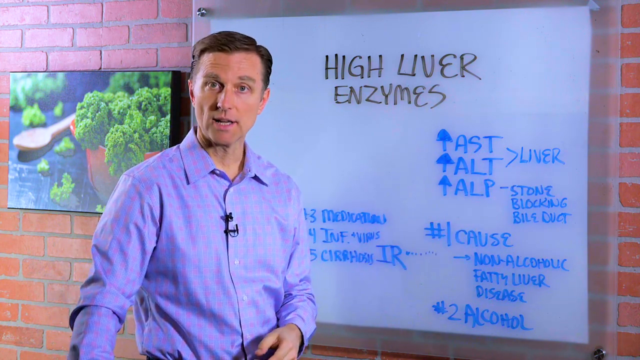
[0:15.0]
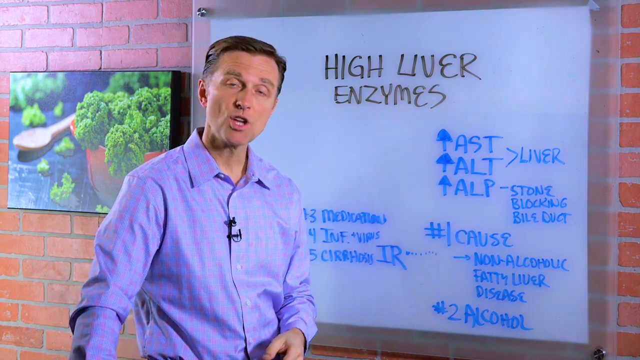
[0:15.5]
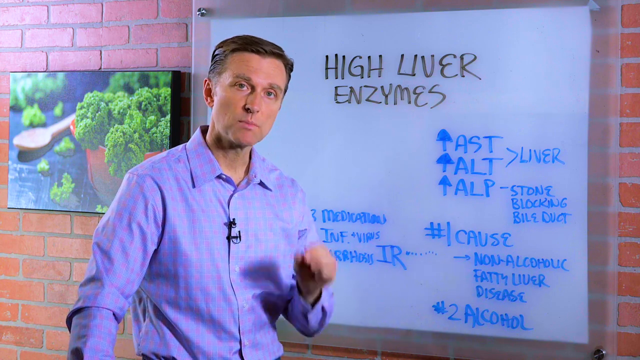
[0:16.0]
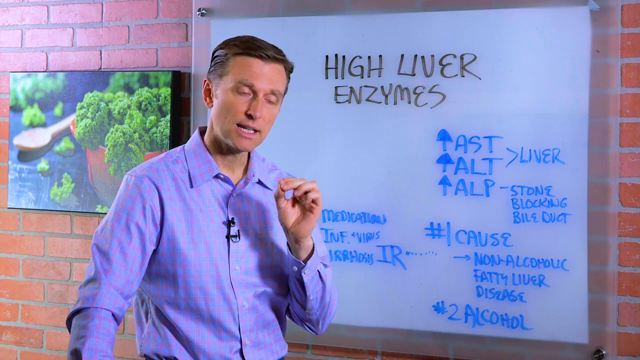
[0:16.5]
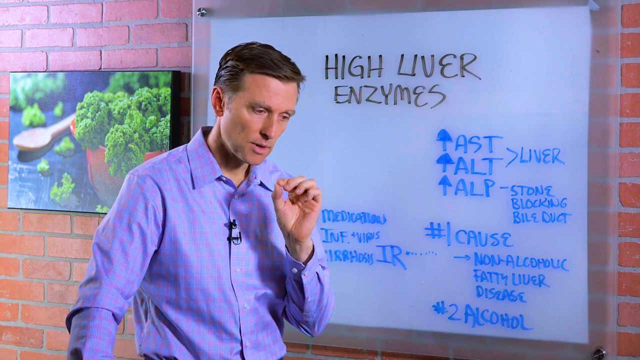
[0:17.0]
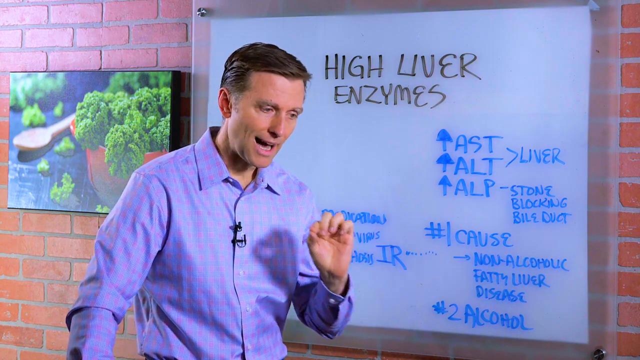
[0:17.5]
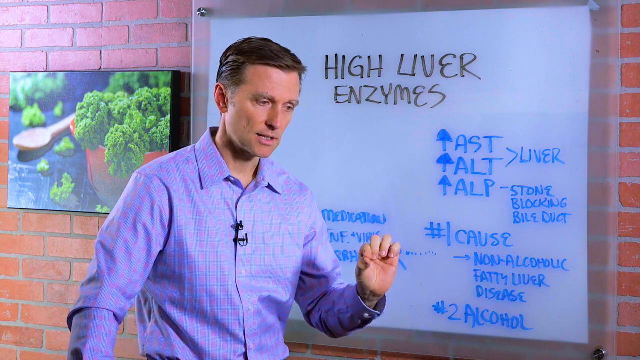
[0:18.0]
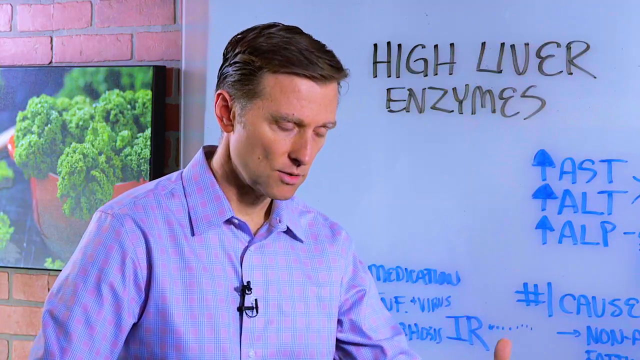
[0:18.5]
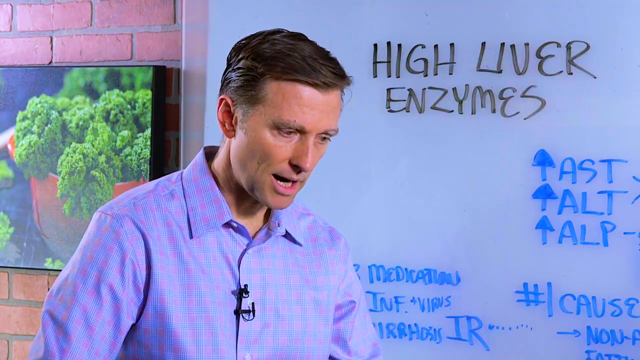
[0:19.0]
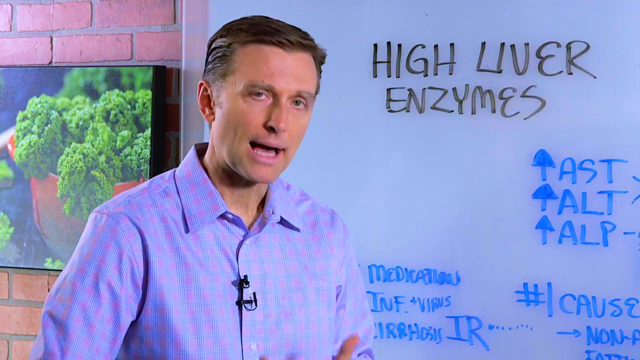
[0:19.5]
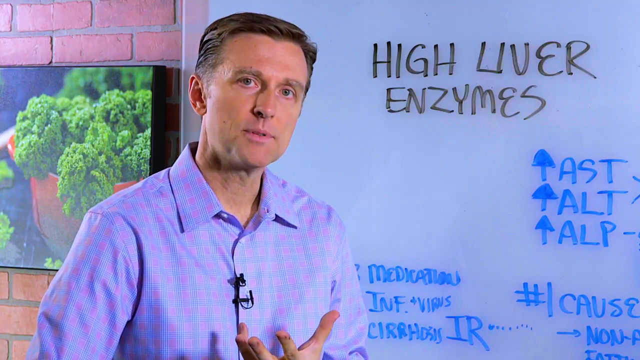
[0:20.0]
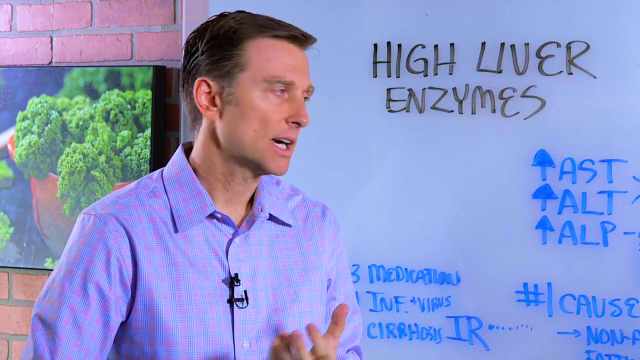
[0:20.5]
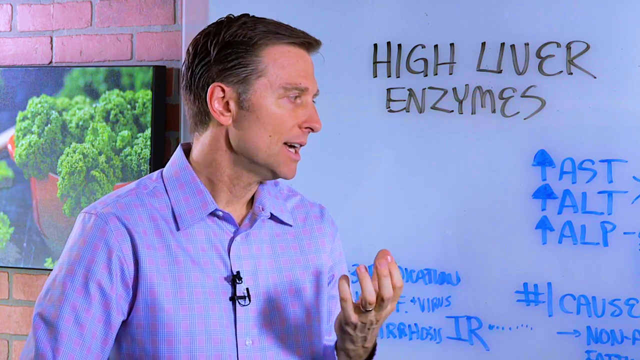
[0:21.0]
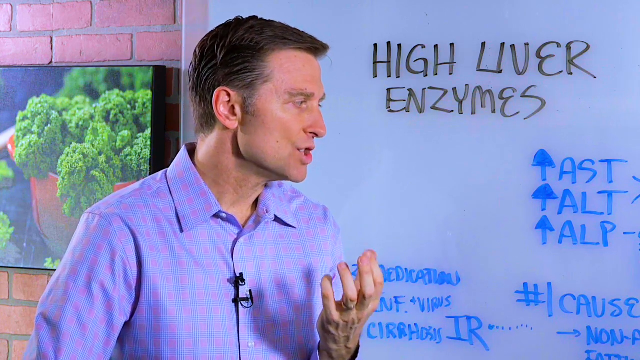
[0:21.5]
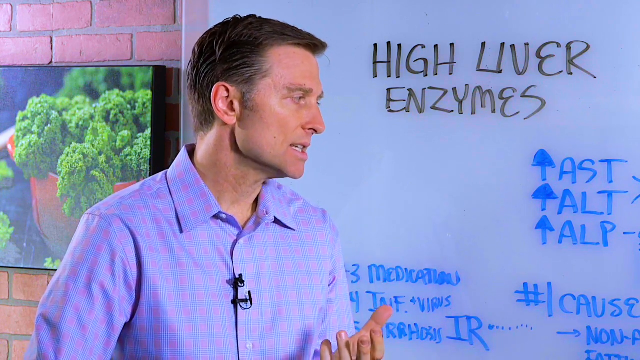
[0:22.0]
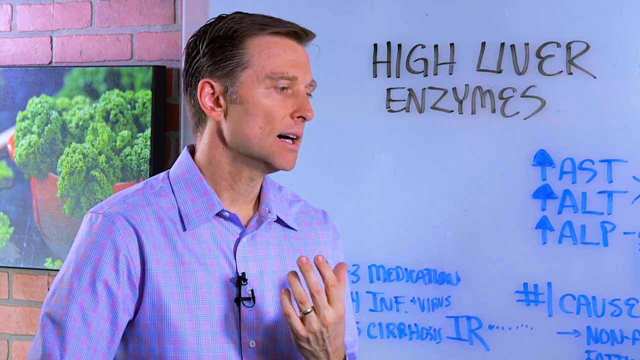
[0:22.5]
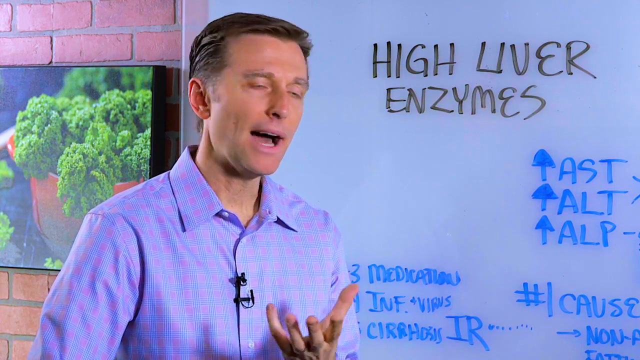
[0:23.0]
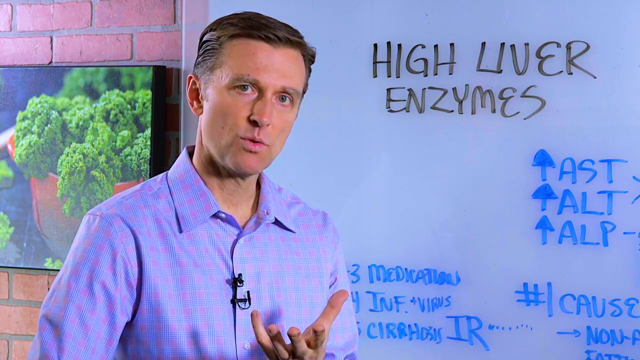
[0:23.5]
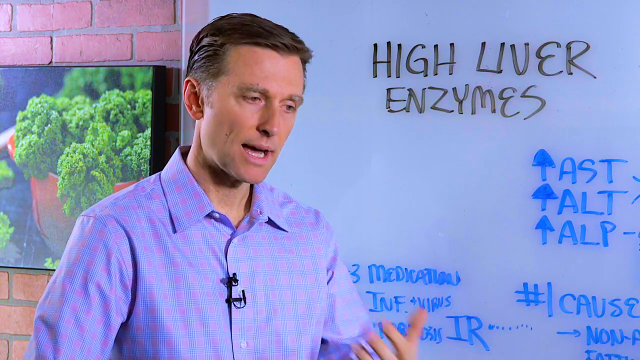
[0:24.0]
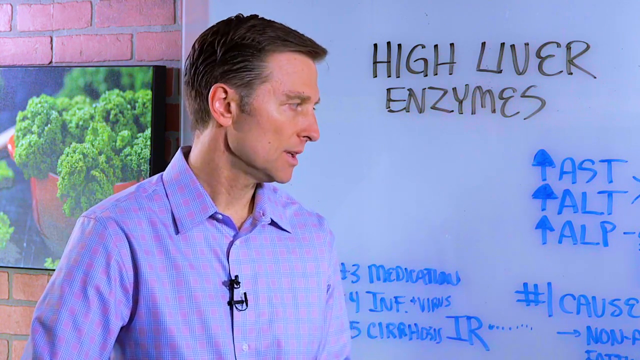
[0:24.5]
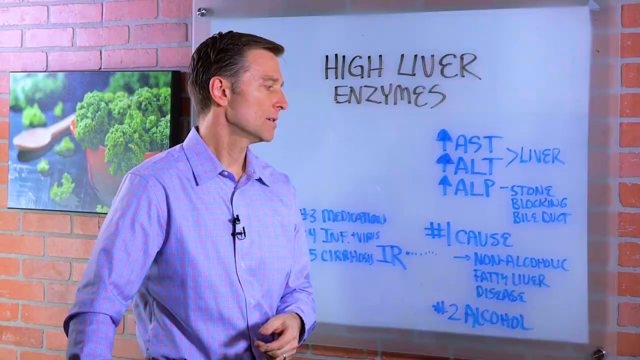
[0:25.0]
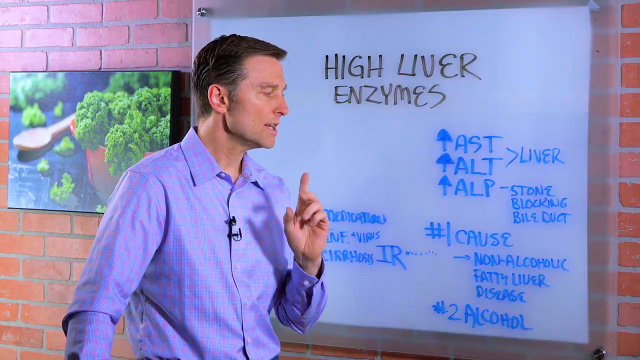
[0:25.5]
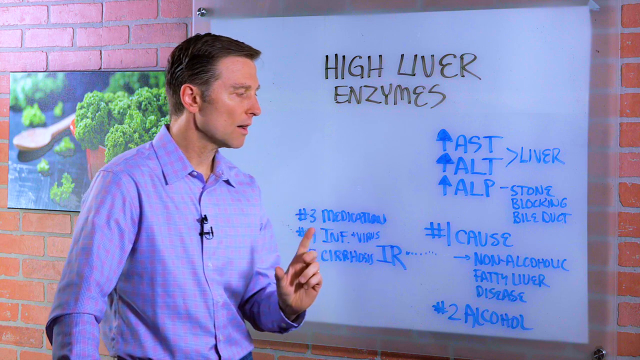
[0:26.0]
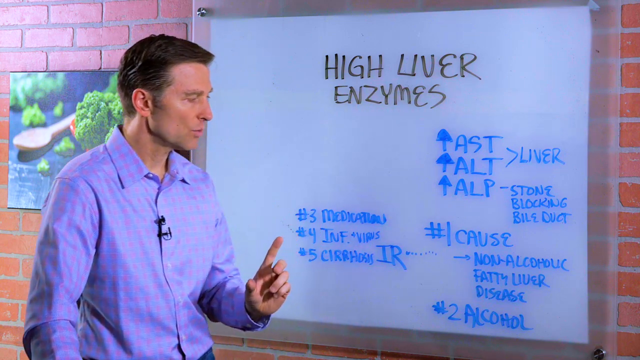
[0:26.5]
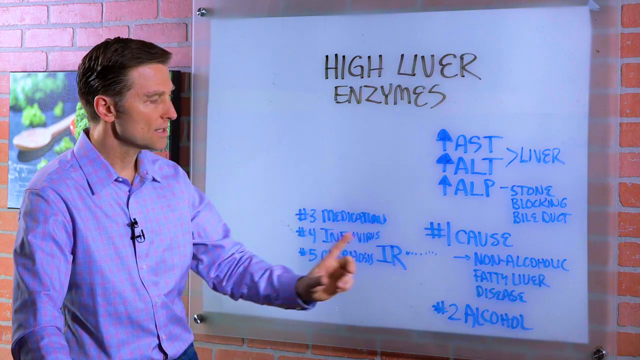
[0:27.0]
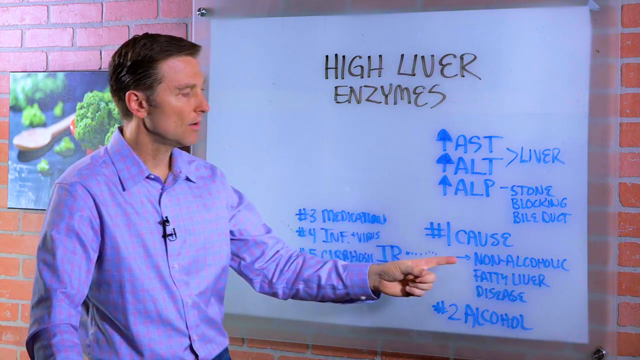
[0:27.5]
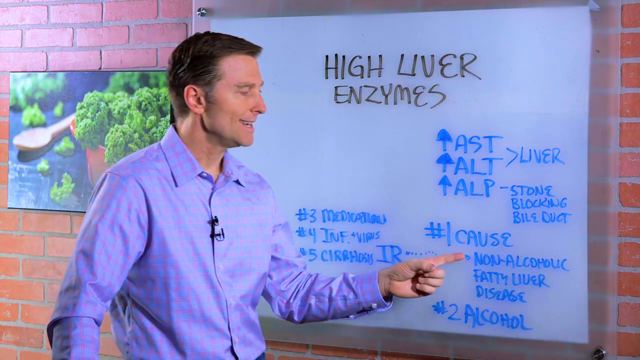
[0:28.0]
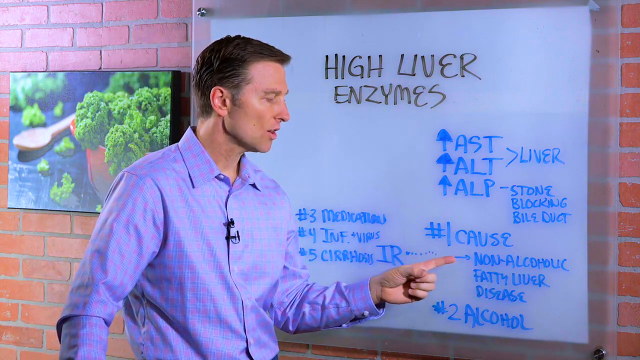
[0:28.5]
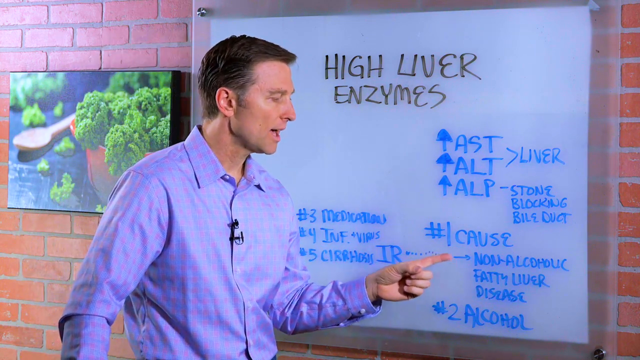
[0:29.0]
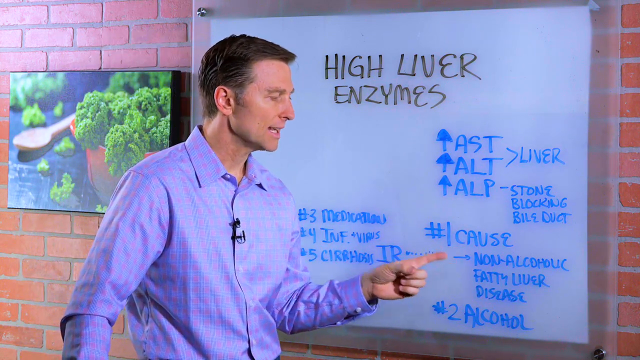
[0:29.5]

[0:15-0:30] The man wears a blue and pink striped shirt with a microphone attached to it. He points at the number one cause, "non," which has an arrow, on the white board. The board is attached to a full wood wall and held up with silver pegs. Next to it is a picture of spinach or kale in a bowl, with a red bowl or pot and a wooden spoon. The man looks at the board with his hand up, and a ring that looks gold is on his ring finger. He points at the number one cause for high liver enzymes, non-alcoholic fatty liver disease. "Medication," "cirrhosis" and "IR" are also on the board. He makes a number one sign with his finger, points at the board, and looks back at the camera. He puts his index finger and thumb together, cups his hand as he talks, and points at the board again.